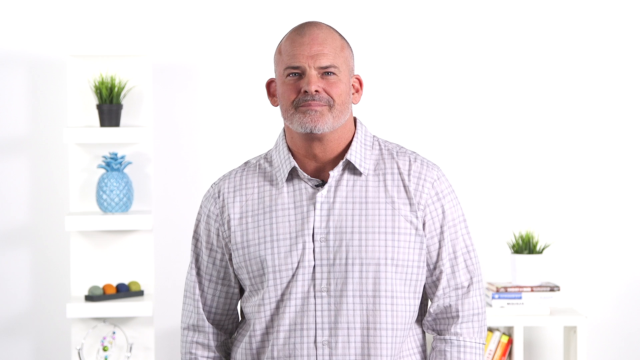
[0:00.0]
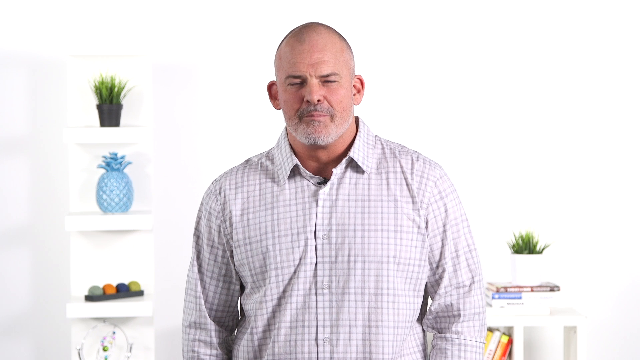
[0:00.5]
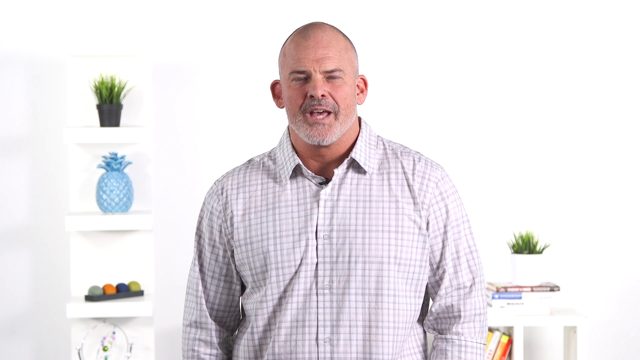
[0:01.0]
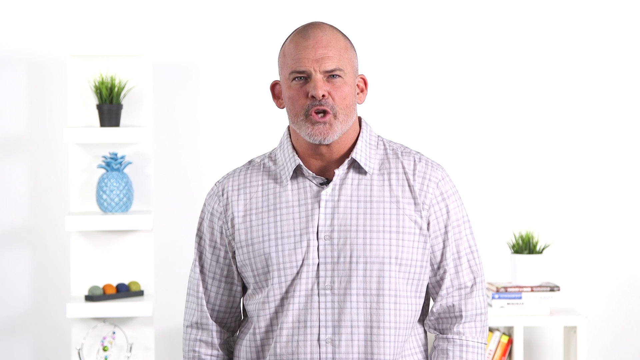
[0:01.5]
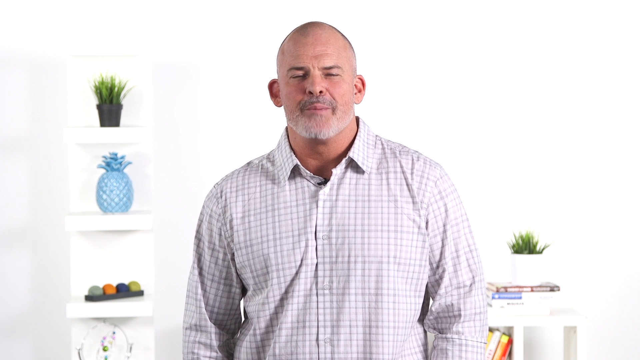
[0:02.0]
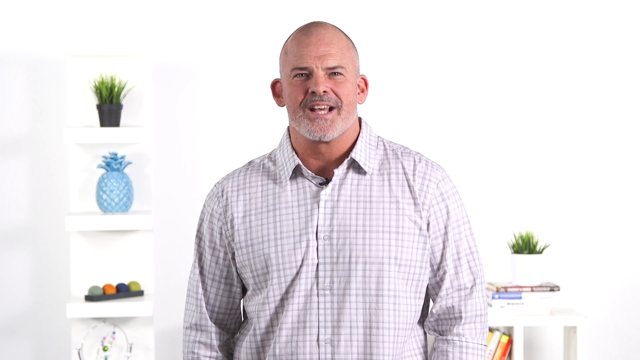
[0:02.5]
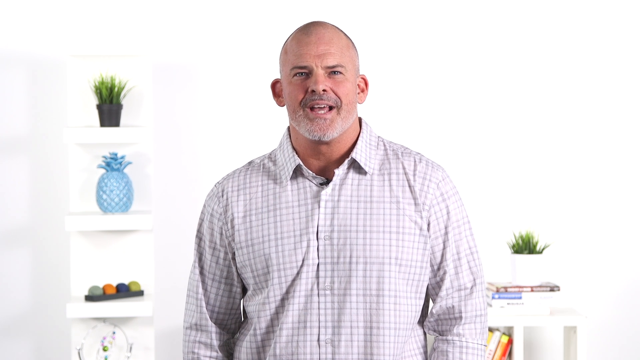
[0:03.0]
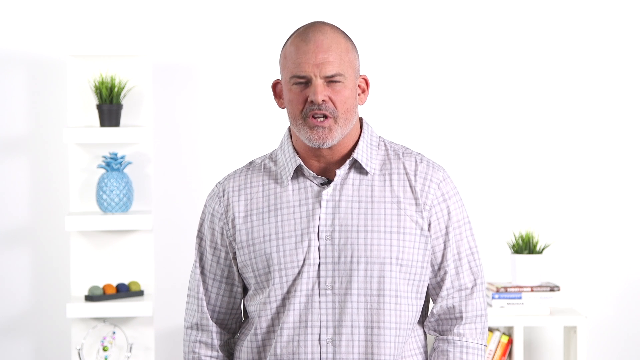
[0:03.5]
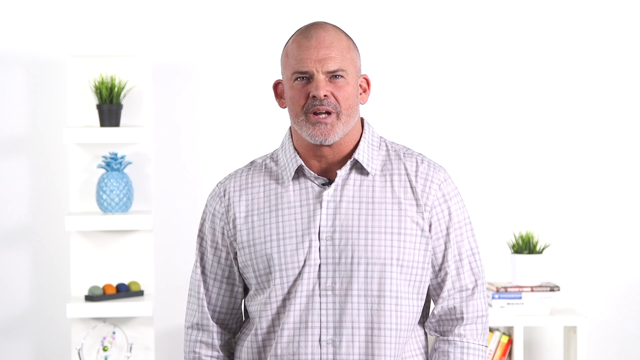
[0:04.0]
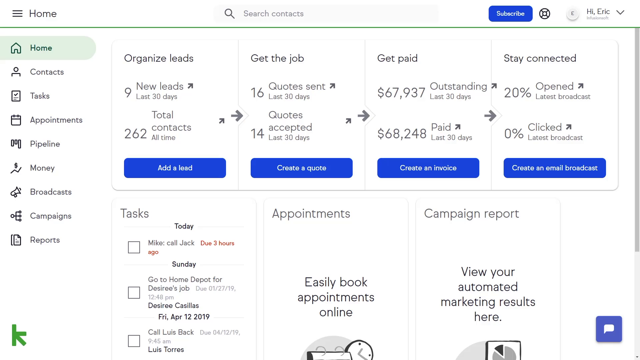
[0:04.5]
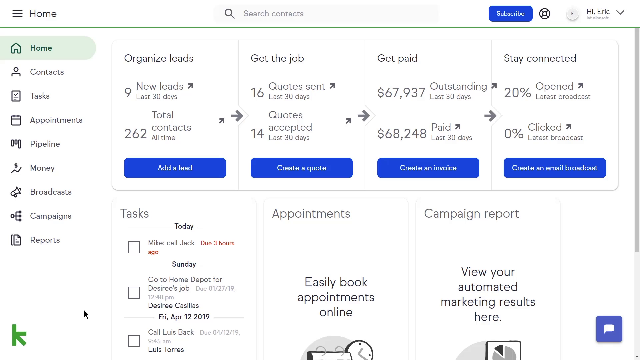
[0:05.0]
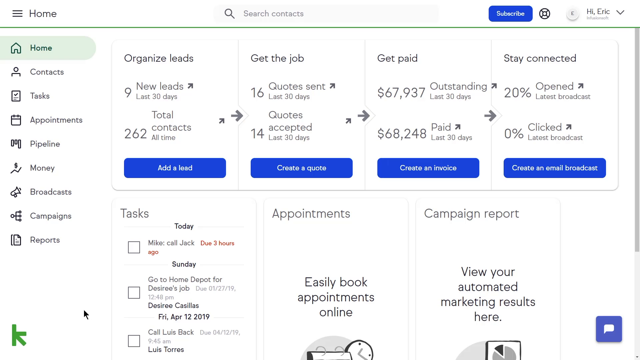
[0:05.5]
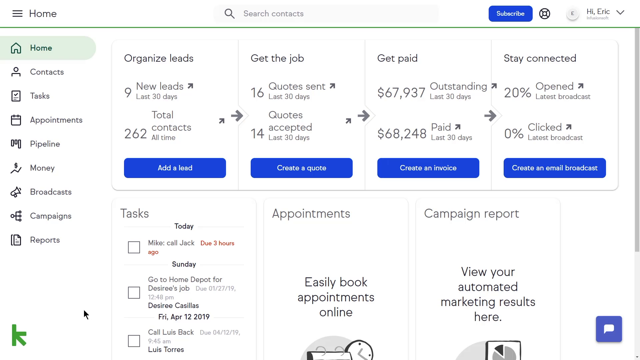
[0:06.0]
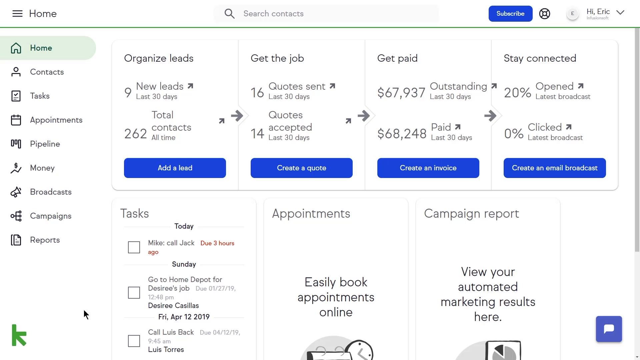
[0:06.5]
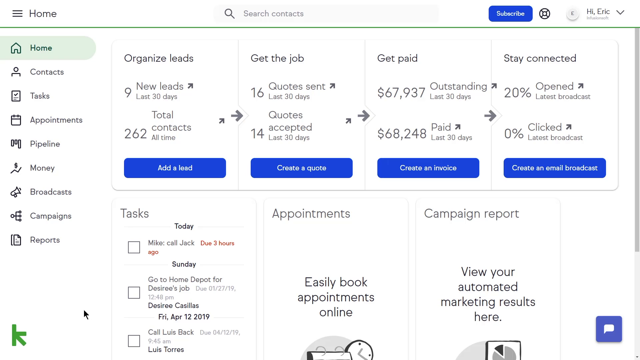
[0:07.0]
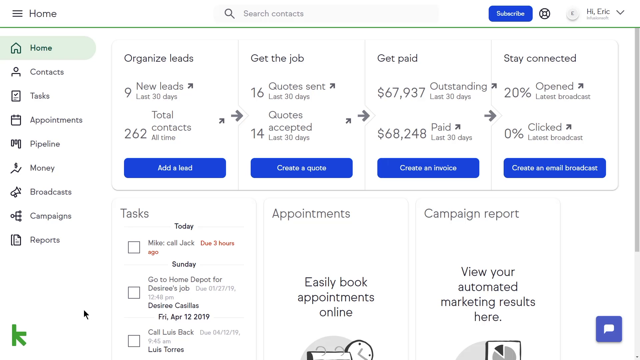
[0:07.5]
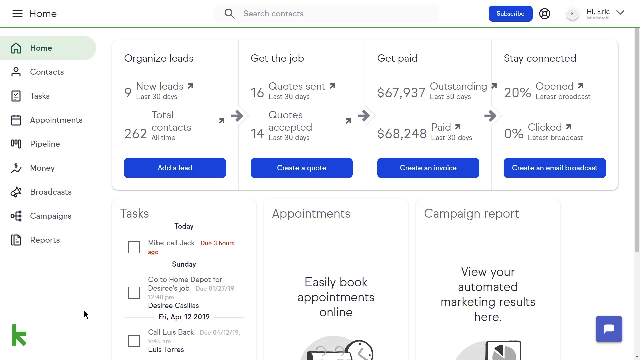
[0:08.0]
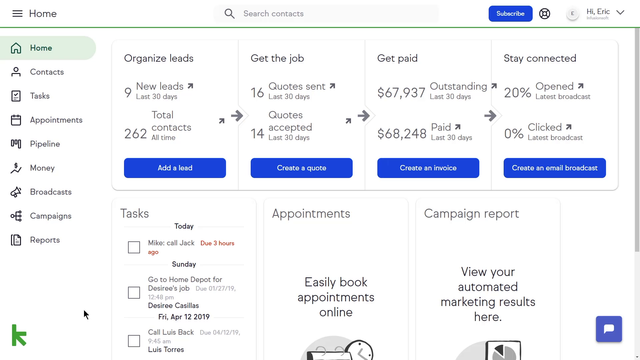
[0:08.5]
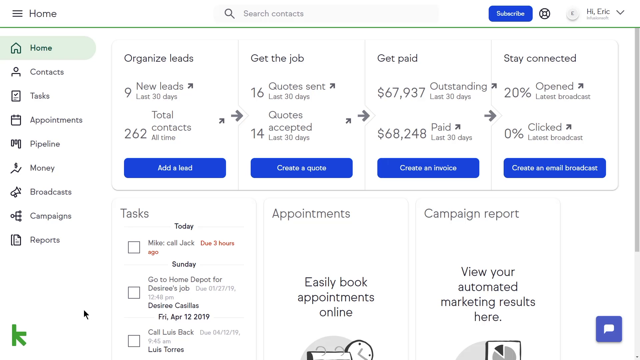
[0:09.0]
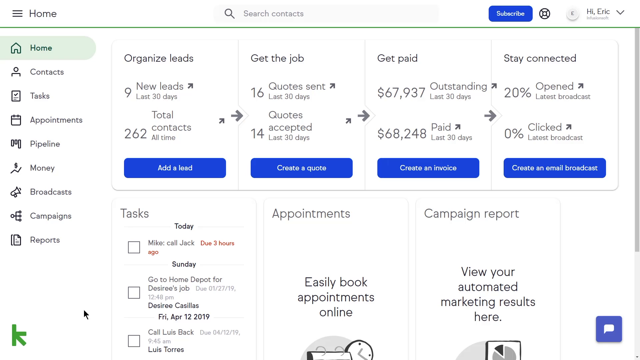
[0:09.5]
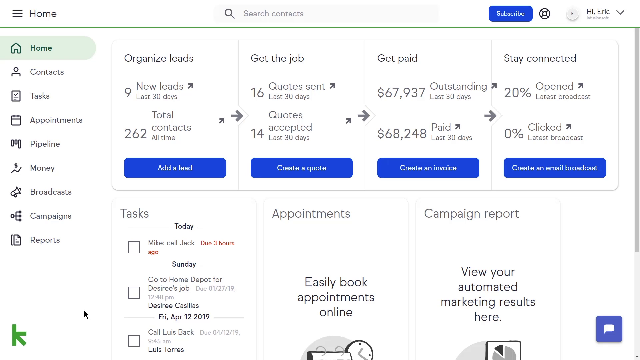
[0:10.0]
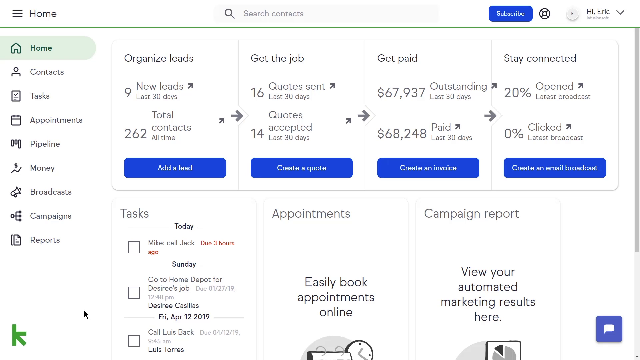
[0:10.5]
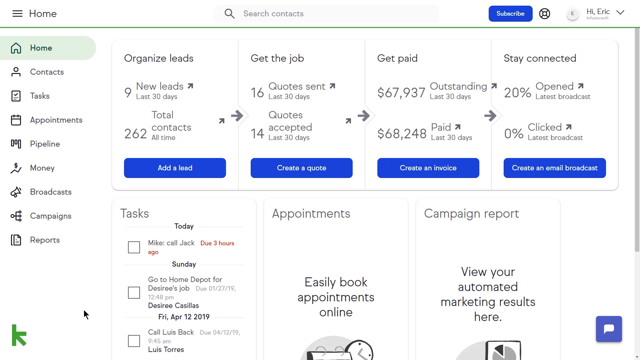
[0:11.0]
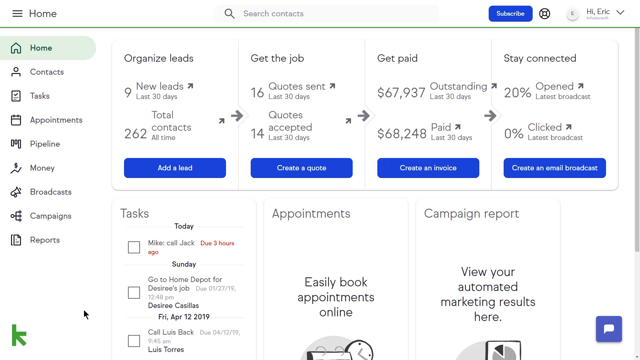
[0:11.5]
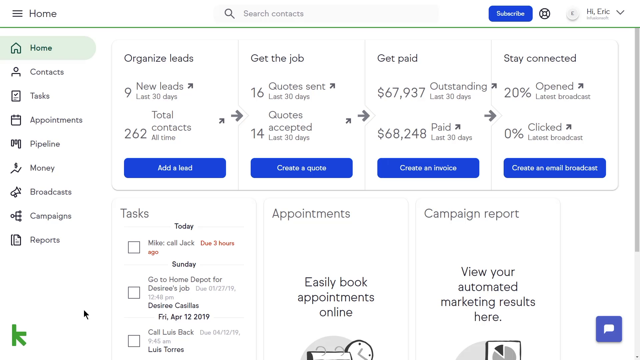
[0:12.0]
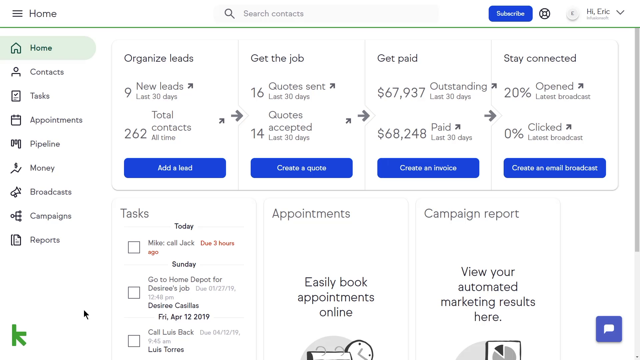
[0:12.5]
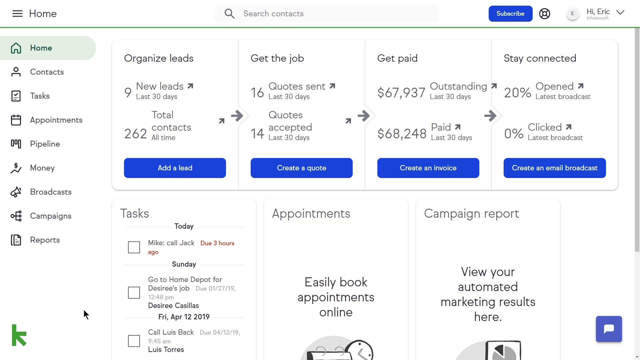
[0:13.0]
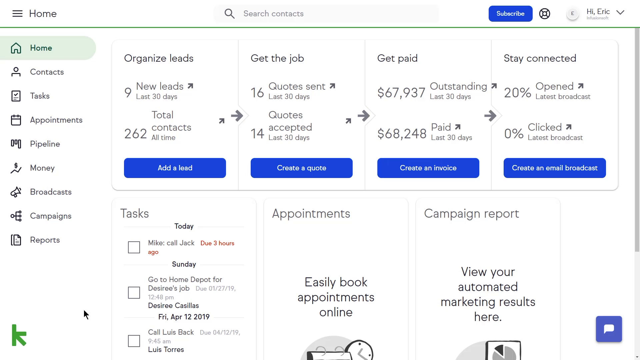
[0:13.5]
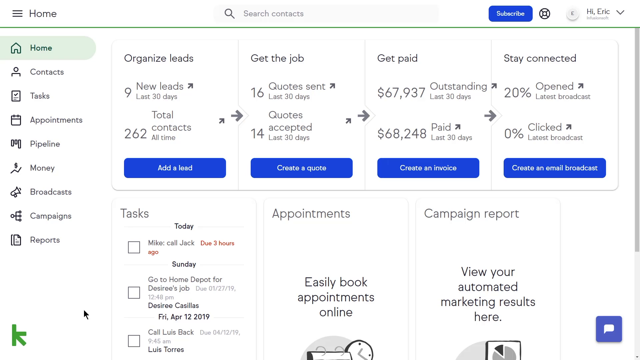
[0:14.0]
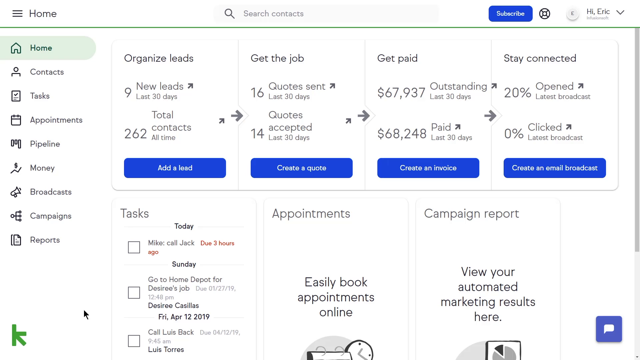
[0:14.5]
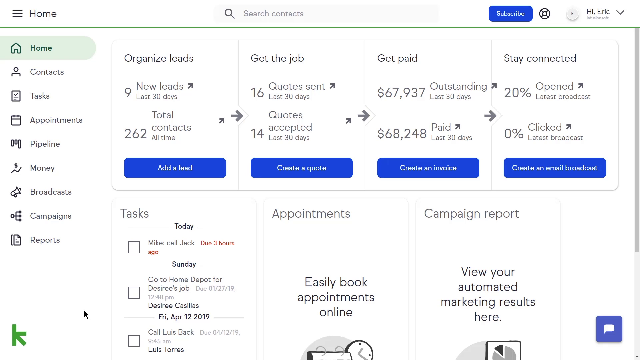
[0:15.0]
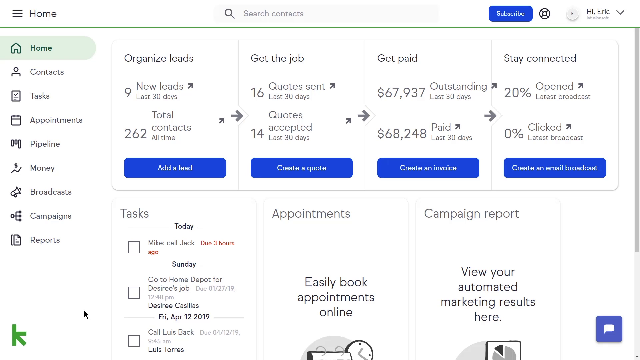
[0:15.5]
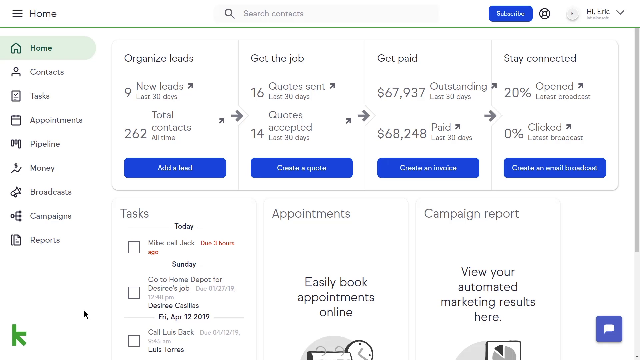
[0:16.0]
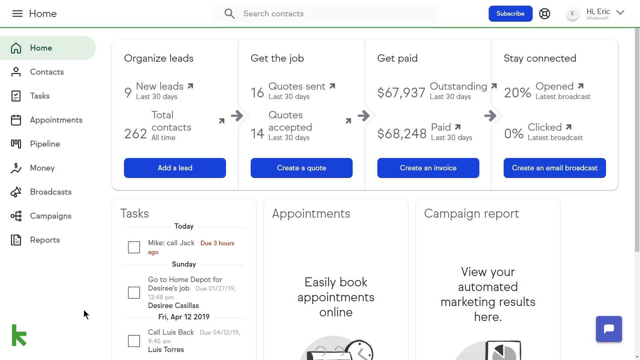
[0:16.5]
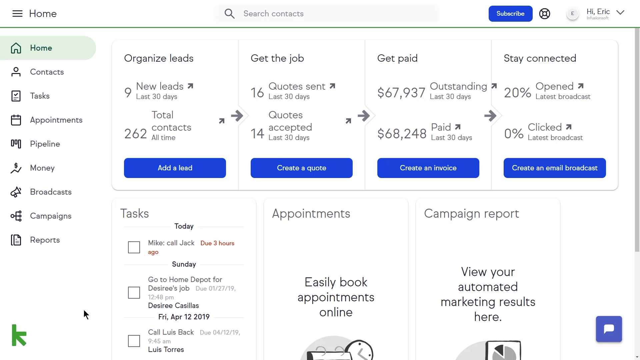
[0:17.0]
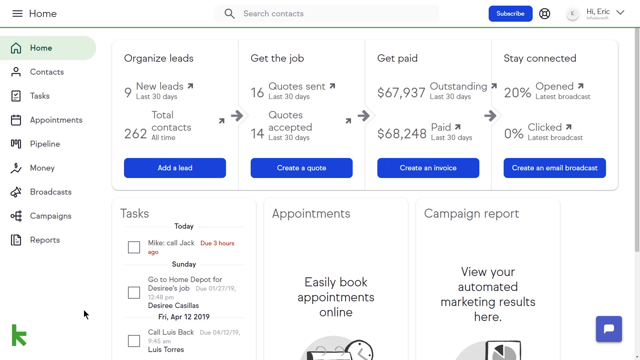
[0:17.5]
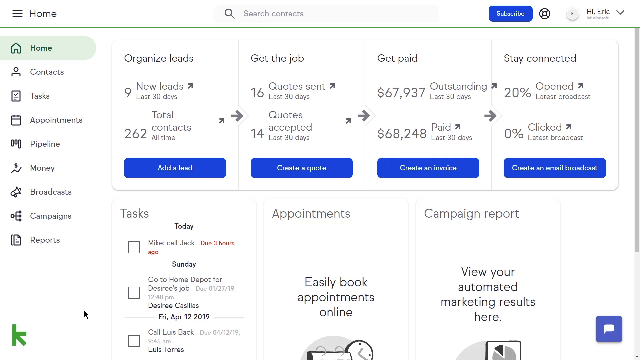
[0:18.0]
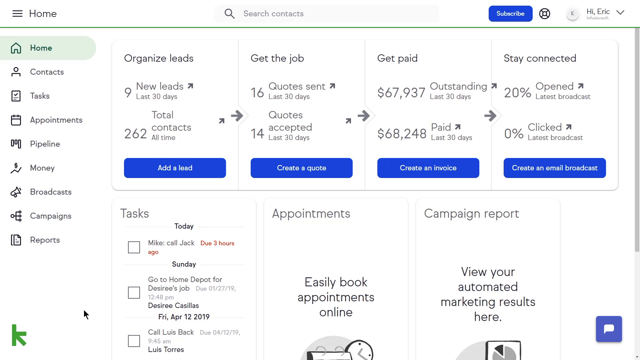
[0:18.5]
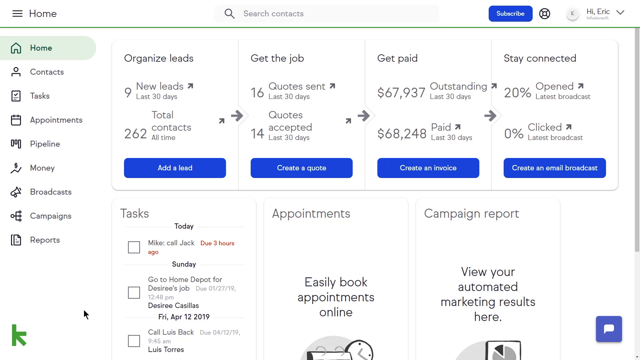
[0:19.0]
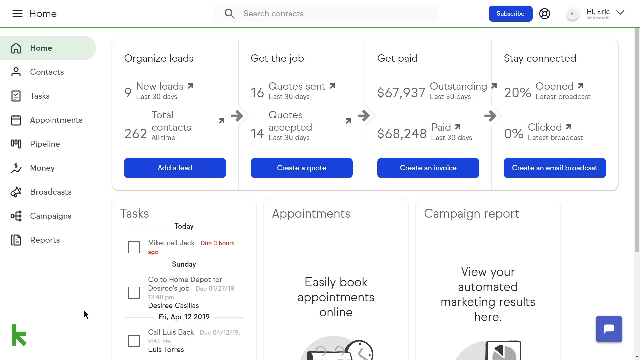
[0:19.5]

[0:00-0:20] A Caucasian man, apparently in his late 30s to early 40s, appears in the middle of the frame. He has a bald head, large ears and a gray-white beard and mustache, and wears a plaid button-up collared shirt. To his left is an image of a shelving unit with three sections: the top section has a potted plant, the middle a crystal vase, and the bottom a group of four balls. On his right-hand side is a small end table with a plant in a white pot. He speaks steadily to the camera, looking directly forward, blinking slowly and nodding his head as he talks. A transition then shows the user interface of a computer program. The middle section is organized into four categories, Organize Leads, Get the Job, Get Paid, and Stay Connected, with information shown underneath each. The left-hand side of the interface is a menu or organizational section with the options Home, Contacts, Tasks, Appointments, Pipeline, Money, Broadcasts, Campaigns, and Reports, each with a small emblem icon to its left.